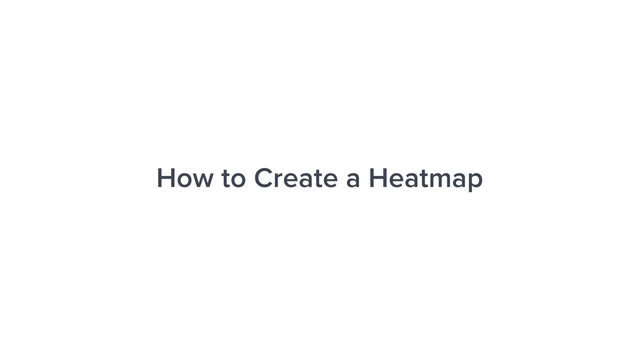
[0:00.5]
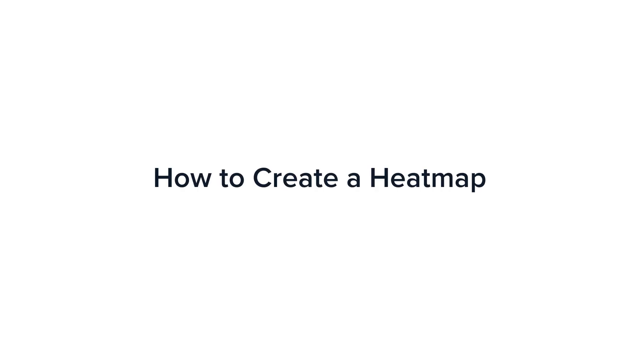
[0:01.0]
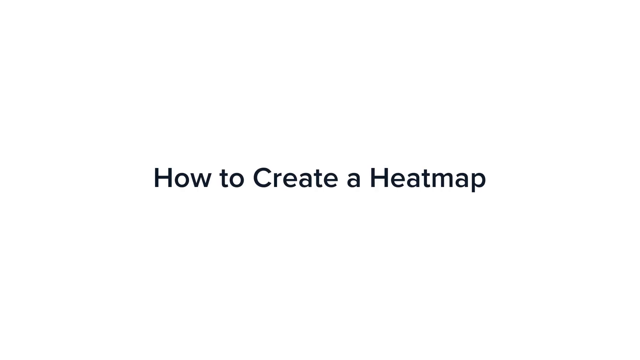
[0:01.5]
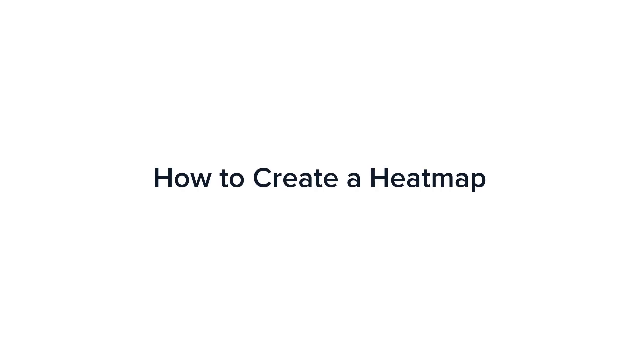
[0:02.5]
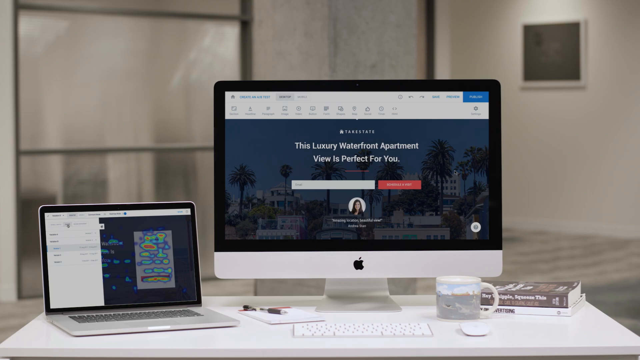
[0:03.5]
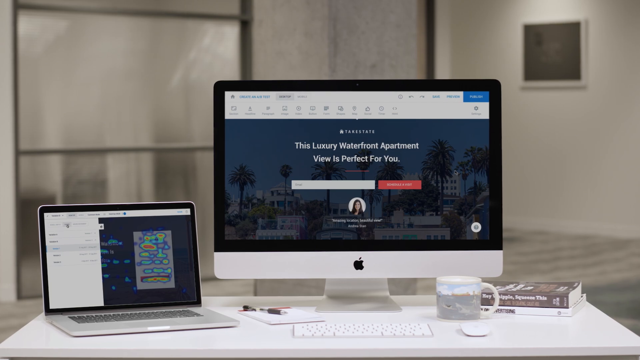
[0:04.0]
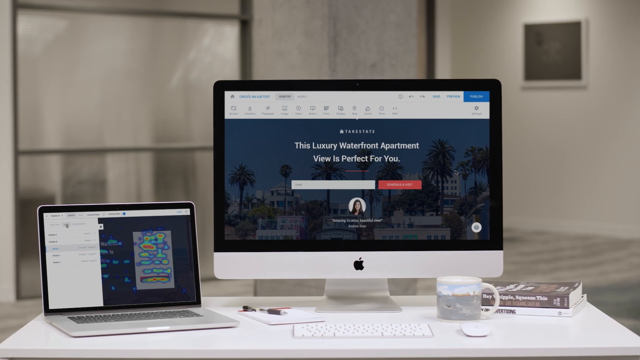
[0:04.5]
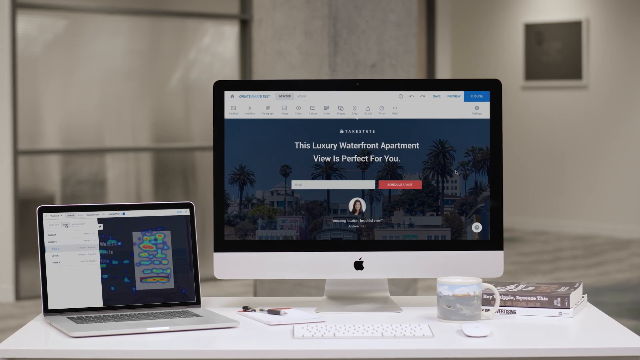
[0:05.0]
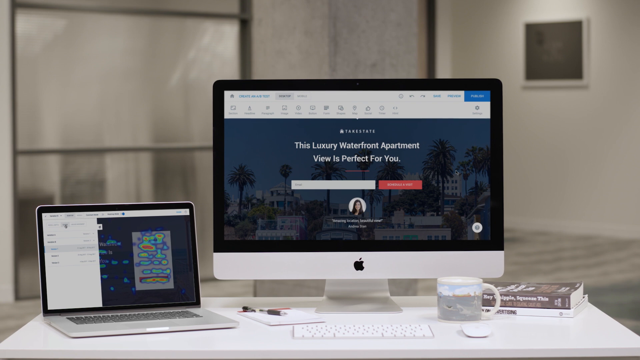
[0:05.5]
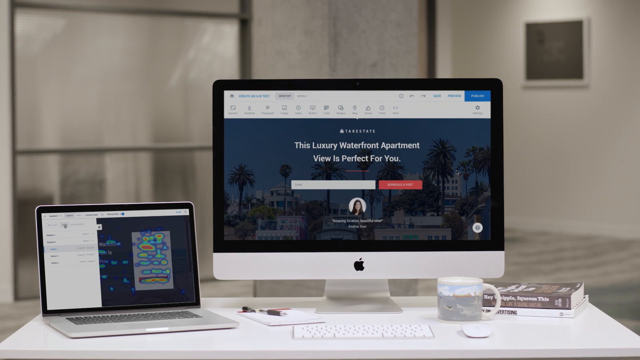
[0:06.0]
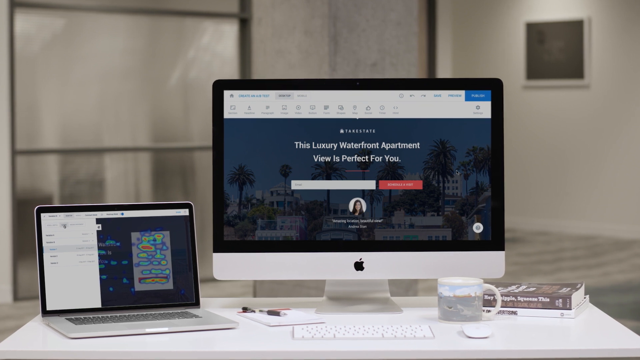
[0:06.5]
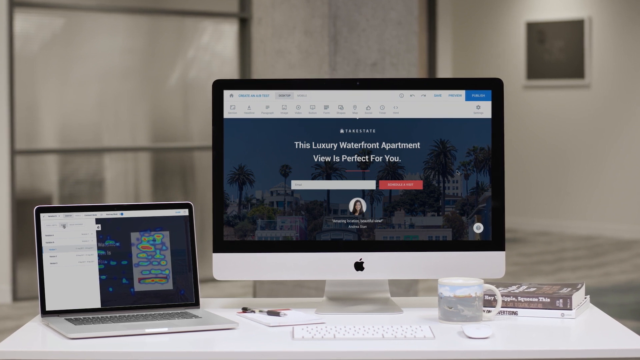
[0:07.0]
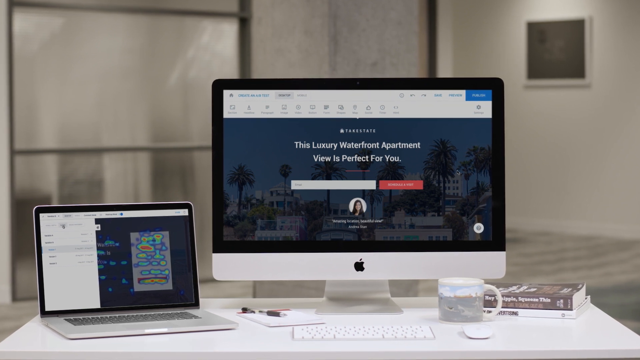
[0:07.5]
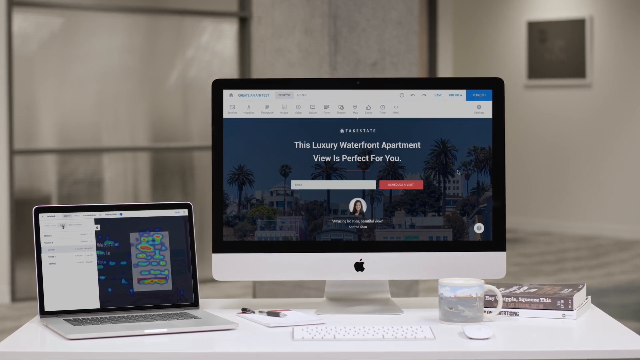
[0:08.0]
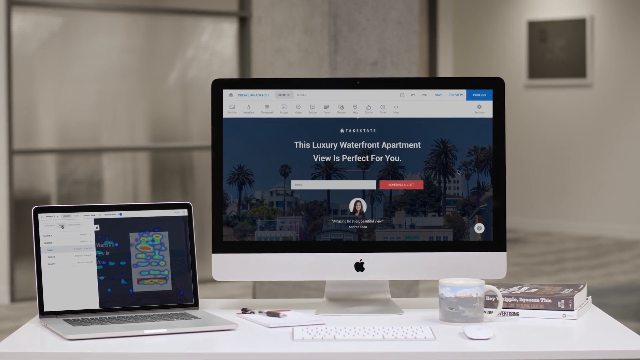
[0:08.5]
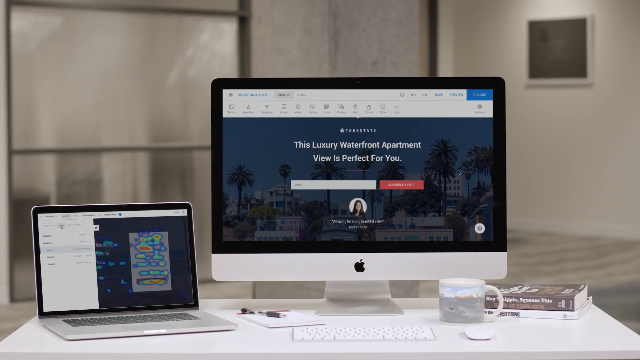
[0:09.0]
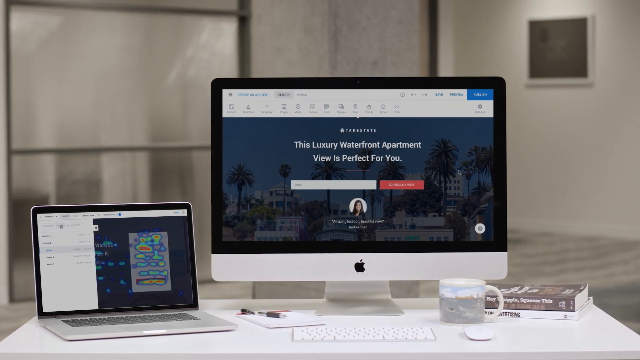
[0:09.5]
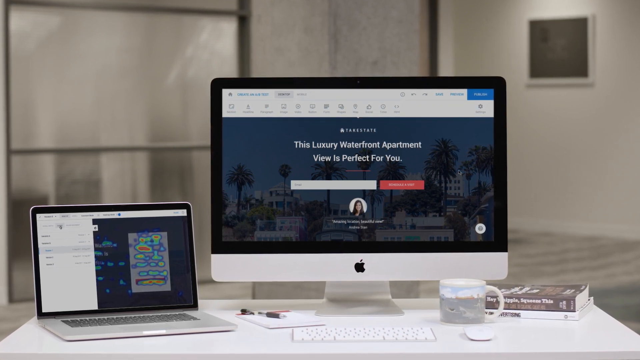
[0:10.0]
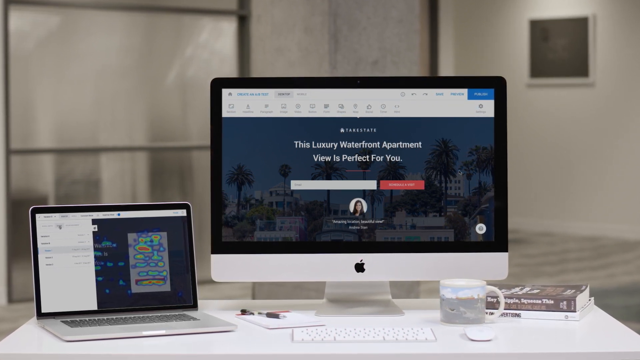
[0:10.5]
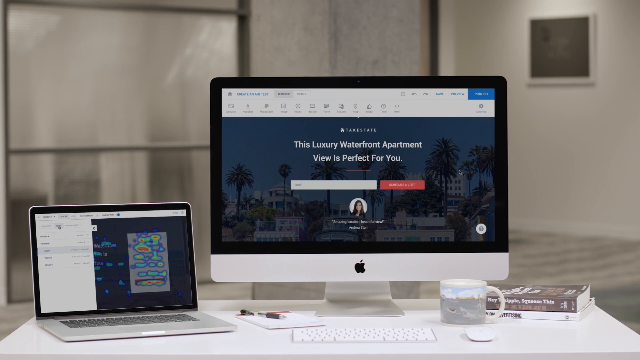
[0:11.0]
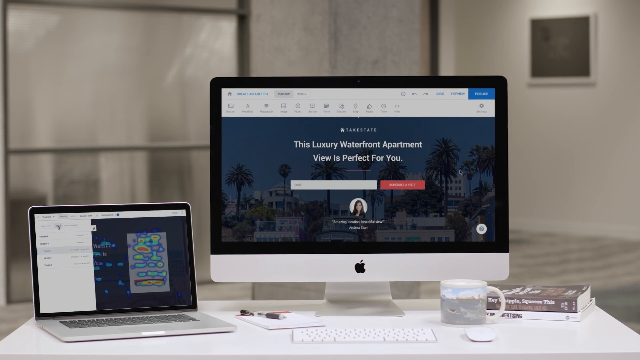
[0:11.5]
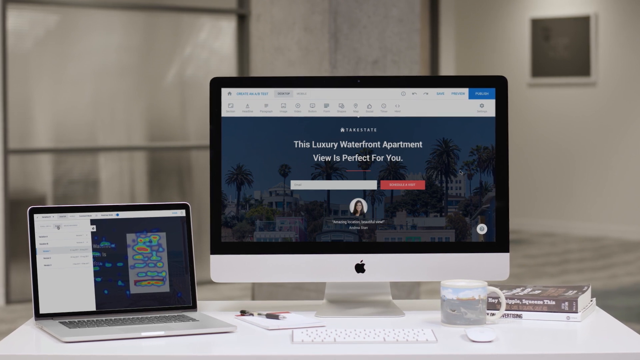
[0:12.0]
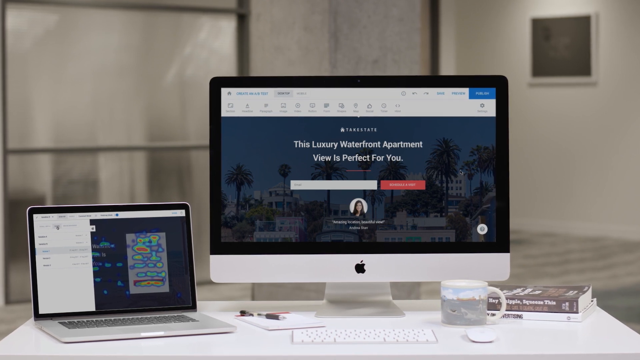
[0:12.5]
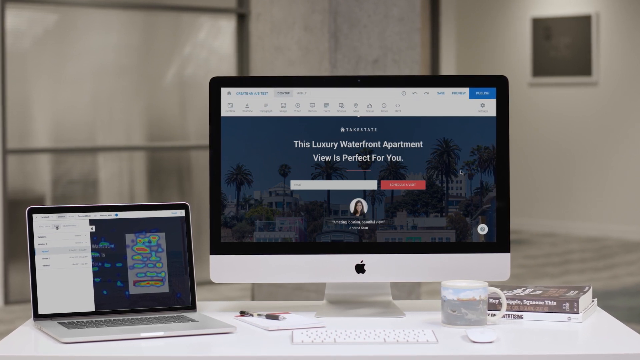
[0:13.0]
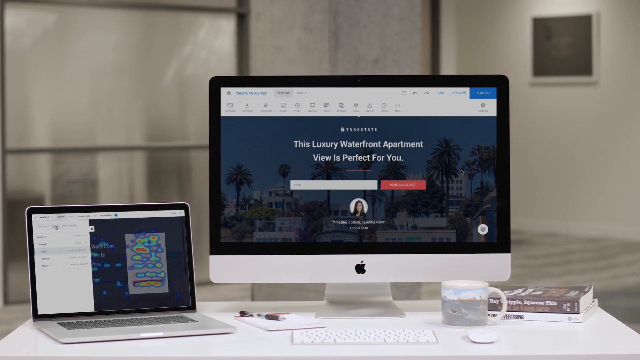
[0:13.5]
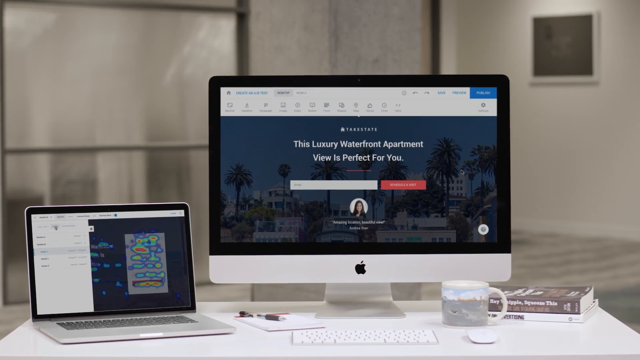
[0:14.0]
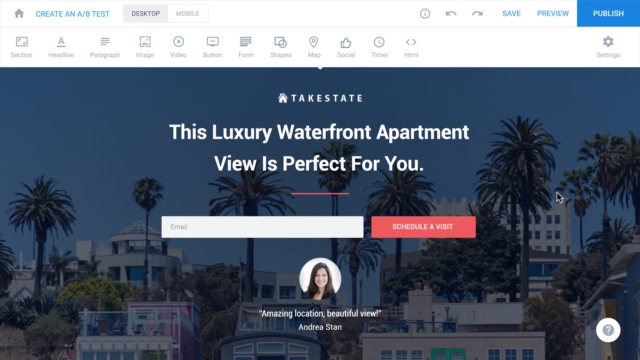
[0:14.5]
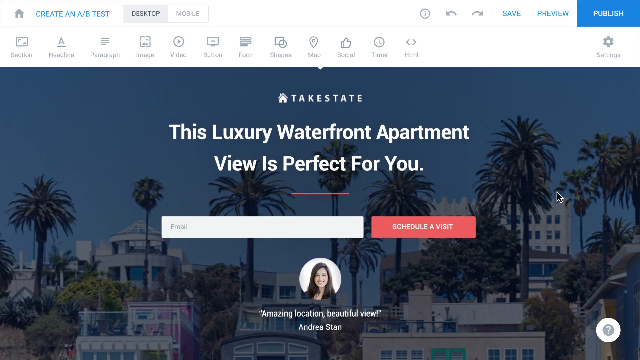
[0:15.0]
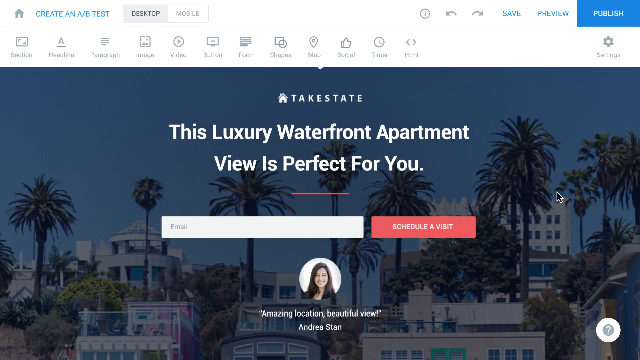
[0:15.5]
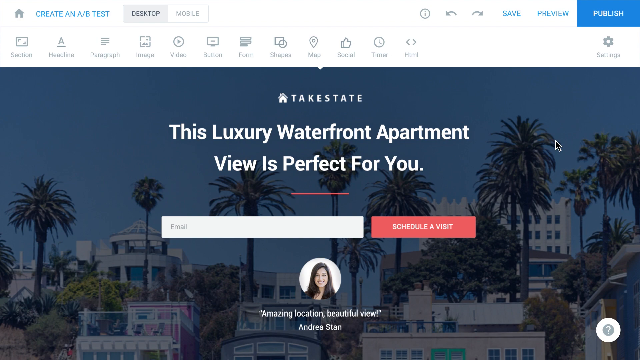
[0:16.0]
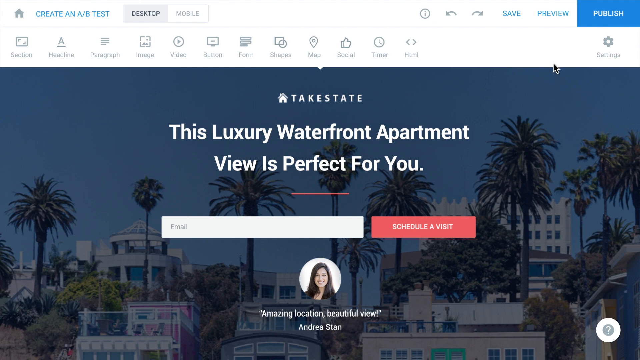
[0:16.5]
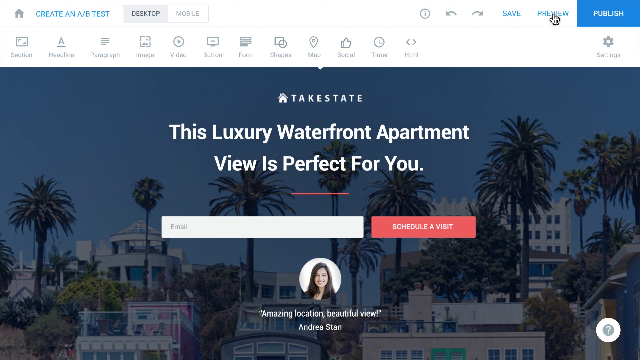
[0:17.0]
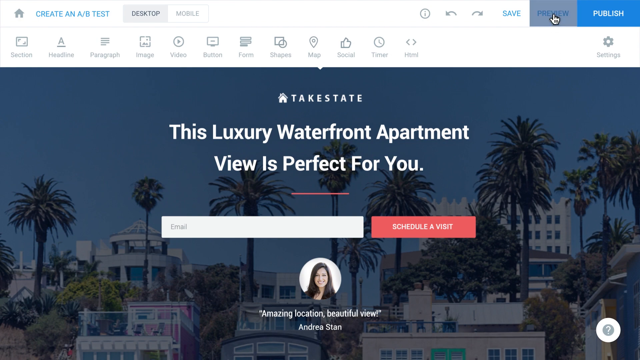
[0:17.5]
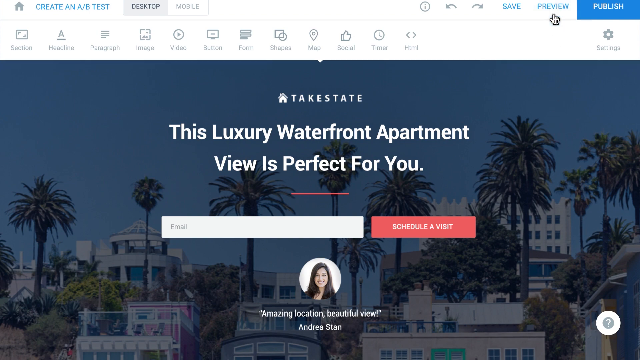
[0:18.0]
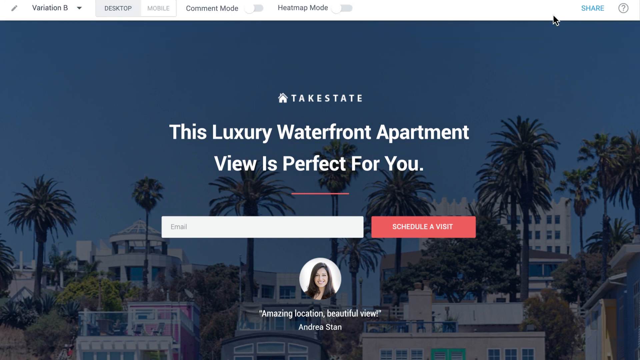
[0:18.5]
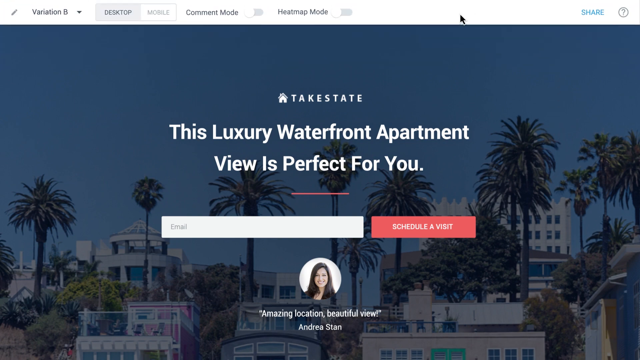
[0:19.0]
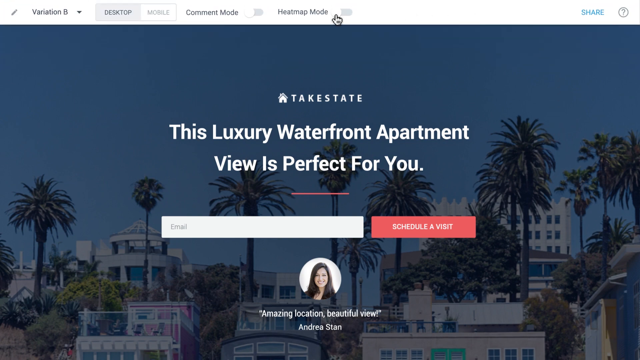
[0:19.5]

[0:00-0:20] On a white screen, text appears and enlarges, reading "how to create a heat map." The video then cuts to a picture of an office: an Apple monitor and a laptop are on display on a white desk, along with a couple of books and a coffee mug. On the big monitor is a website landing page for a luxury waterfront apartment. On the left side there appears to be a heat map, with a navigation menu on the left part of the screen; the heat map shows different colors, yellow, red and blue. The view zooms in until the landing page takes up the whole screen. At the top it says "create an A B test," and in the upper right corner is a blue rectangle that says "publish." On this page there is a woman's face in a circle with a quote and her name. The cursor clicks on the preview button, the top menu changes, and a variation B layout is shown. They toggle over to the heat map to turn it to blue.